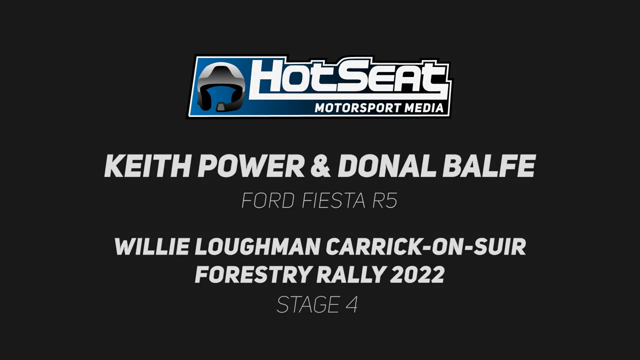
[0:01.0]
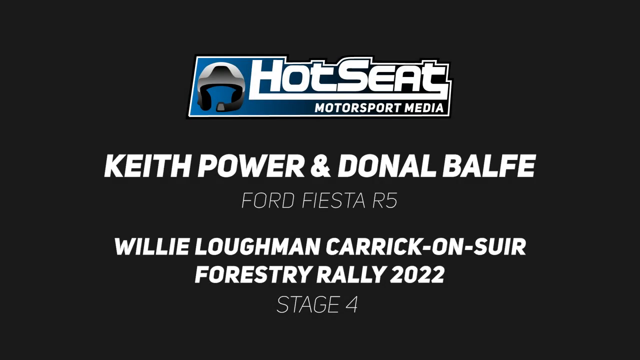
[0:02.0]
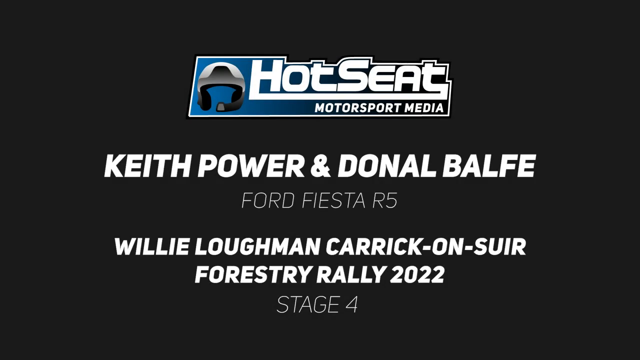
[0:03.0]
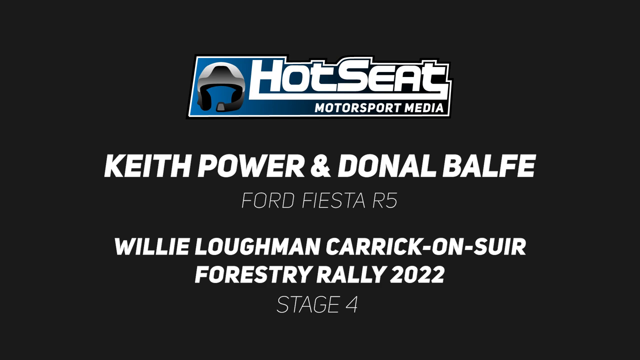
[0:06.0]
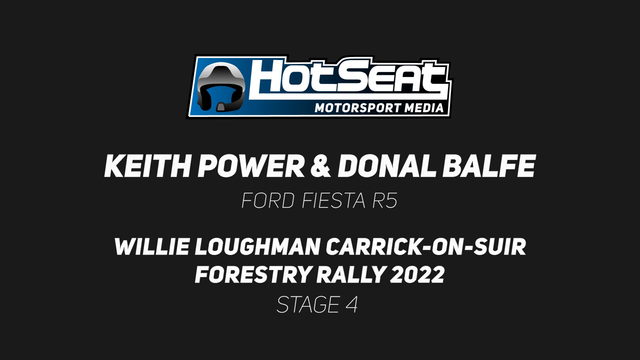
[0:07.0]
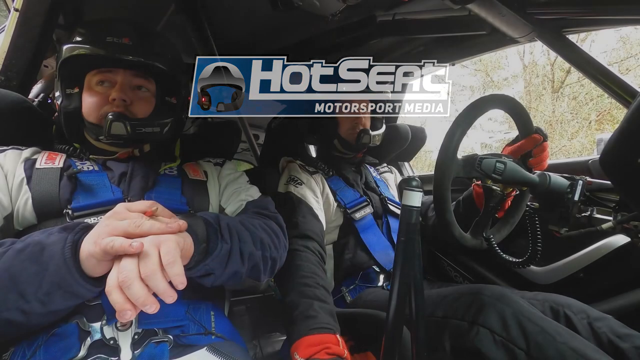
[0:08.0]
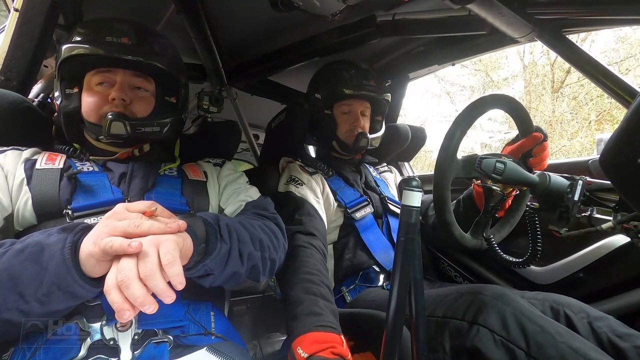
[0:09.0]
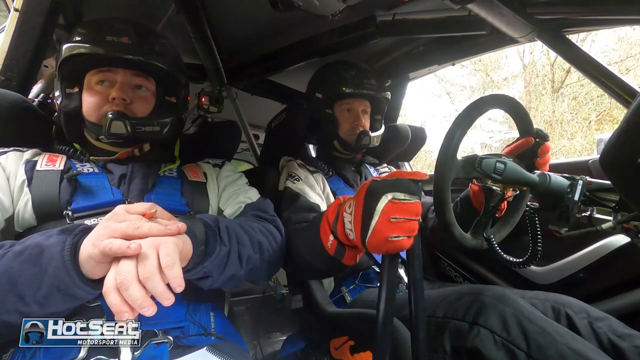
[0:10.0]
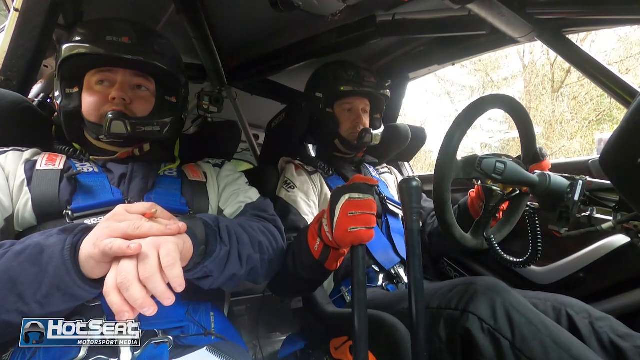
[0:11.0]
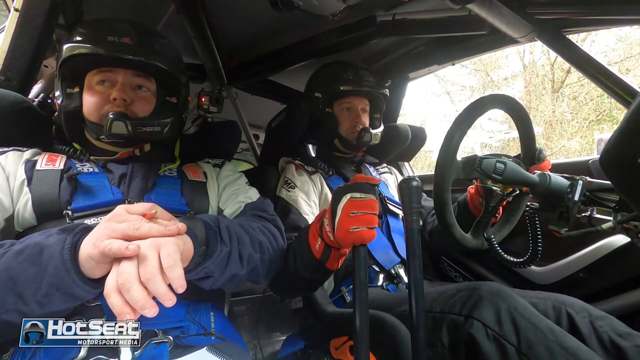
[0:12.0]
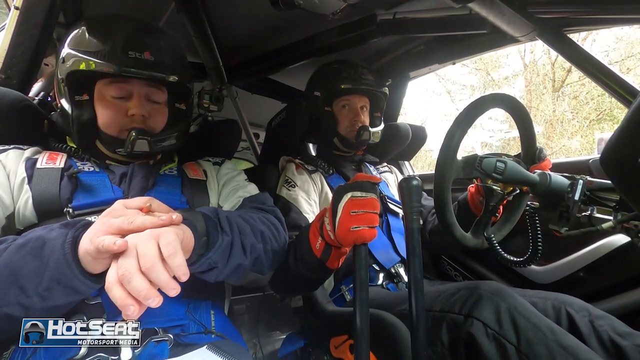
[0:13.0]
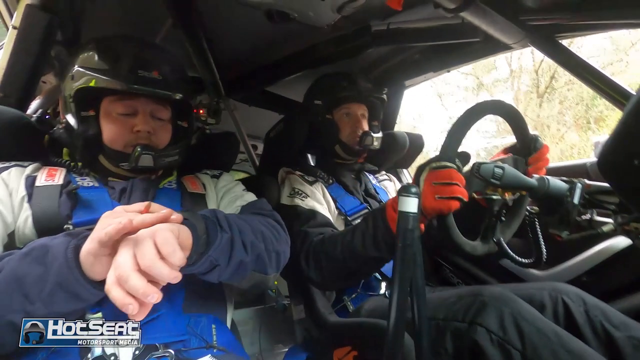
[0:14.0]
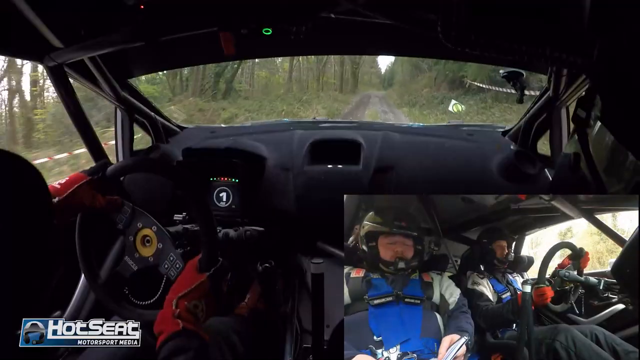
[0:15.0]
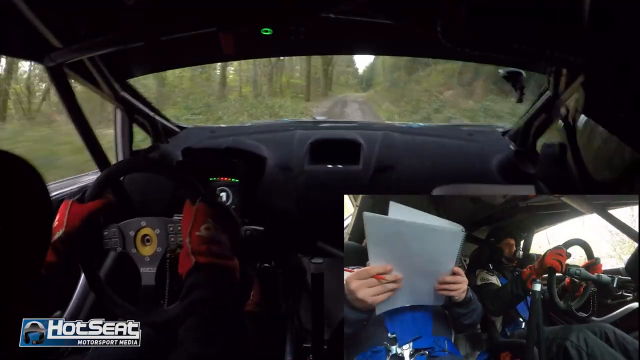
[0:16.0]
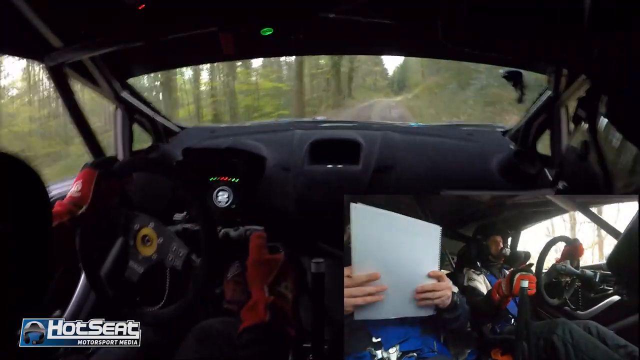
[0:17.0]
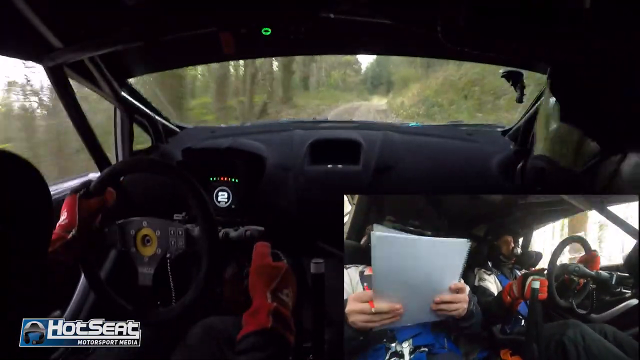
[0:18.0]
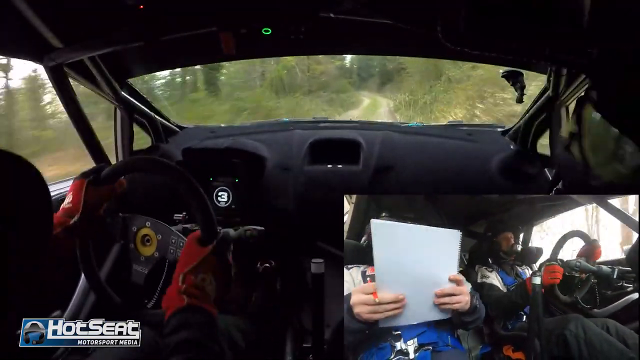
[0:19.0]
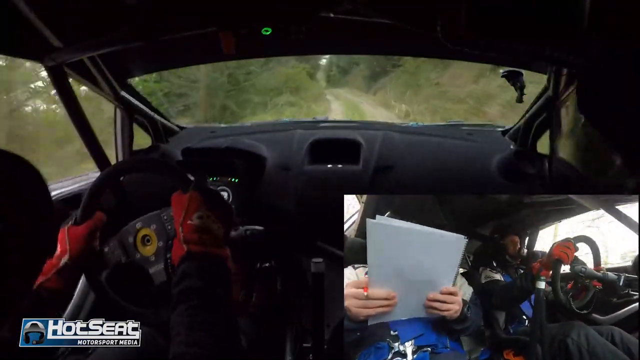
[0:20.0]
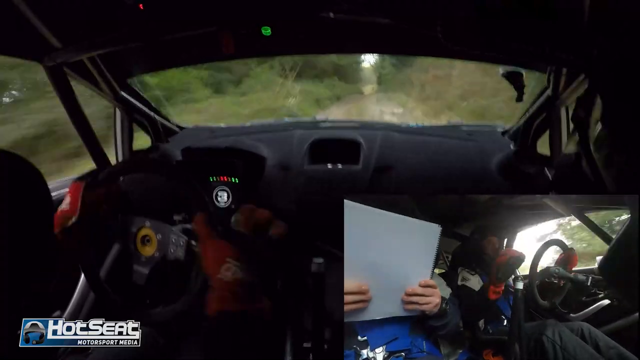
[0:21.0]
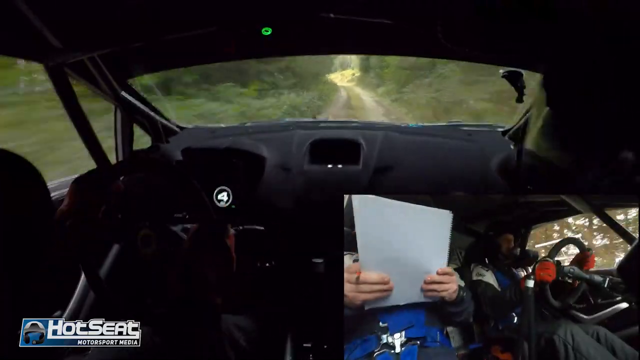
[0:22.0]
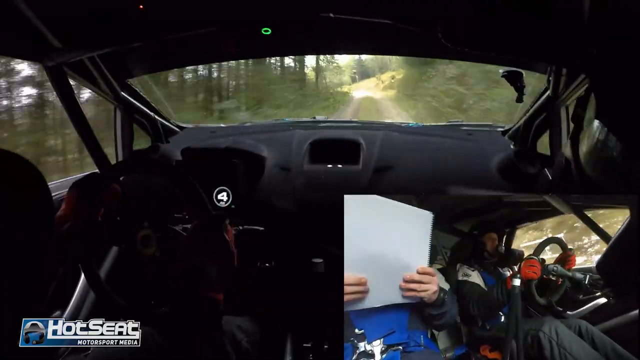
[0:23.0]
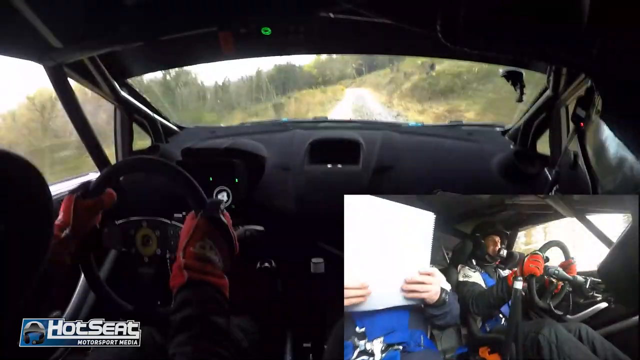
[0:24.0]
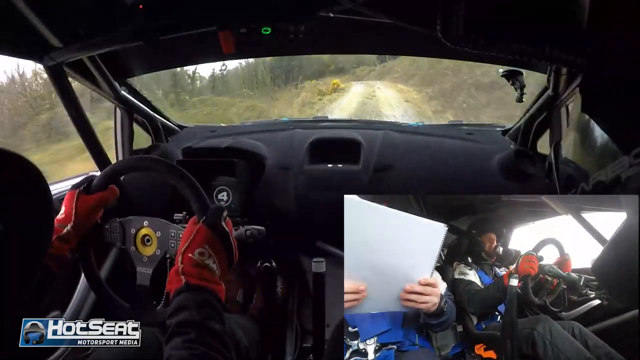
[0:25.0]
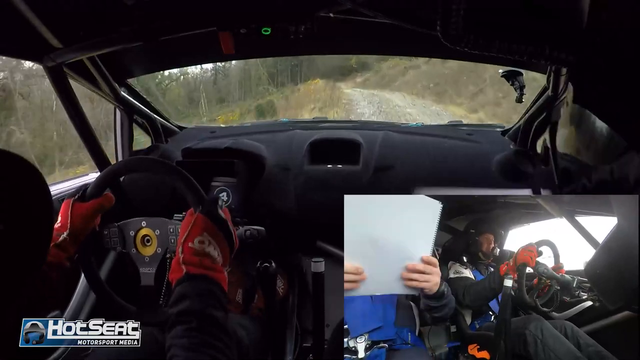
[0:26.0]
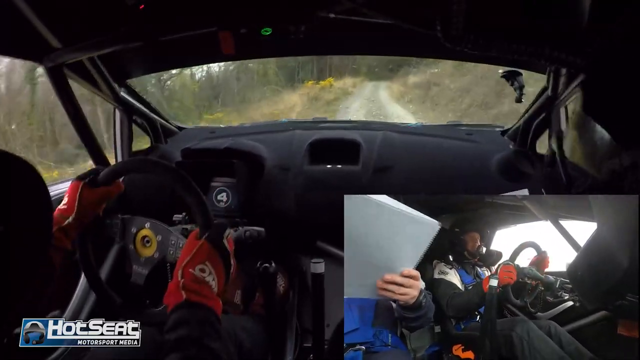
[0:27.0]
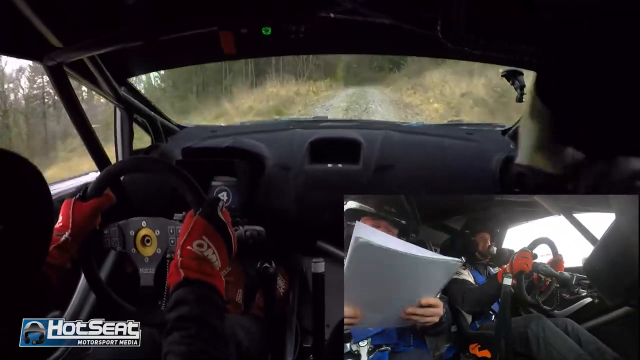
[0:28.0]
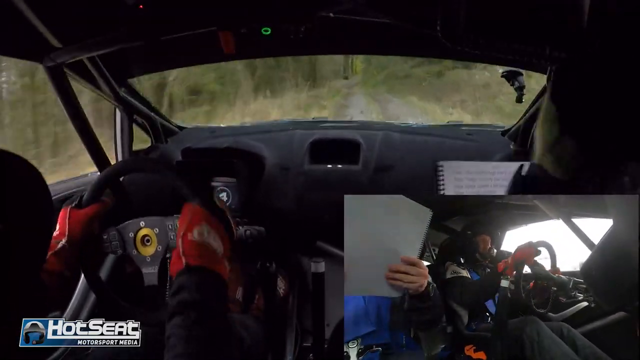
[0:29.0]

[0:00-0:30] The video opens on a black screen, and then images pop up, including what looks like a logo reading "Hot Seat Motorsport Media" with a picture of a helmet. Text reads "Keith Power and Donald Baffey, Ford Fiesta R5, Willie Lofman, Carrick Oncer, Forestry Rally 2002"; all of the wording is in white. The scene then switches to two men in a car that looks built to go fast. They wear a lot of safety gear, apparently including seat belts that go around the chest. One camera view seems to come from someone in the back seat recording as they drive, and they are not on a road but apparently on a trail. A smaller camera view in the bottom right shows their faces as they drive. One of the men, whose face cannot actually be seen, has a bunch of papers in his hand that bounce up and down. From the main camera, they appear to be going at a very high speed. The car is not a regular car: it has a racing steering wheel and a reinforced body in case it rolls.